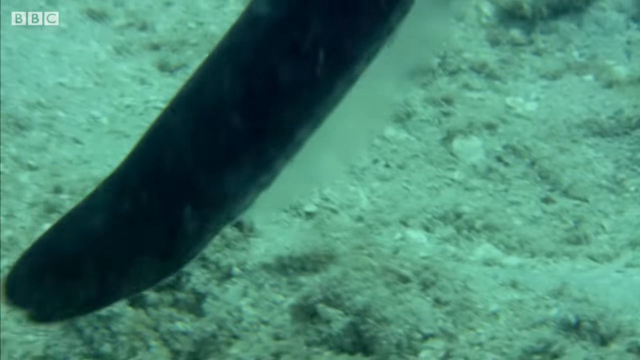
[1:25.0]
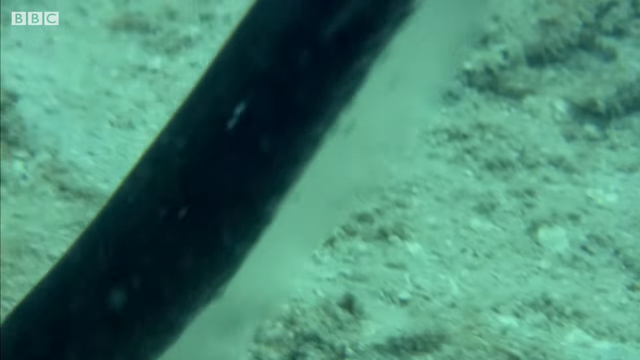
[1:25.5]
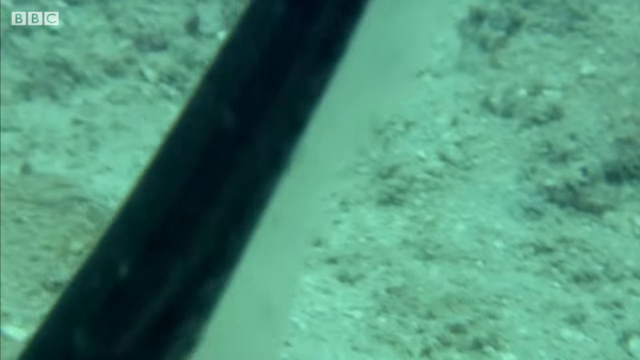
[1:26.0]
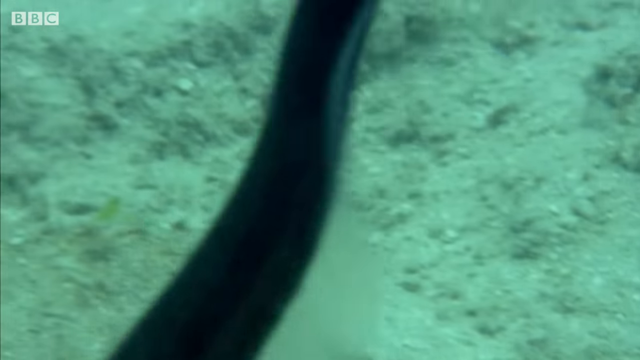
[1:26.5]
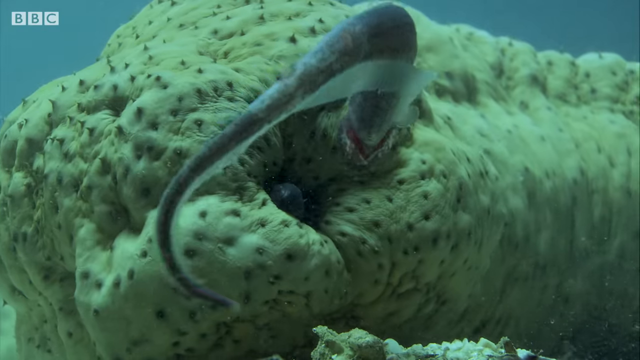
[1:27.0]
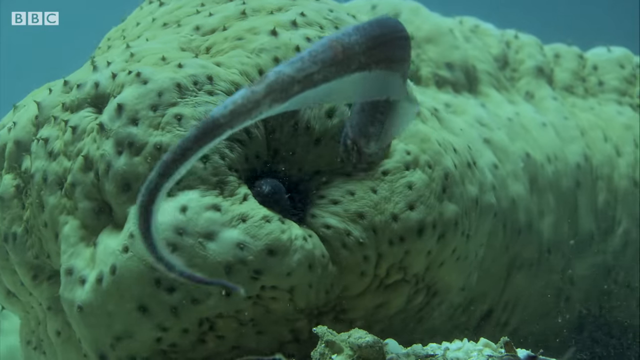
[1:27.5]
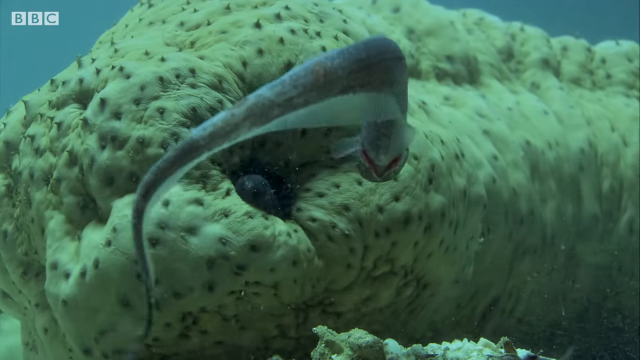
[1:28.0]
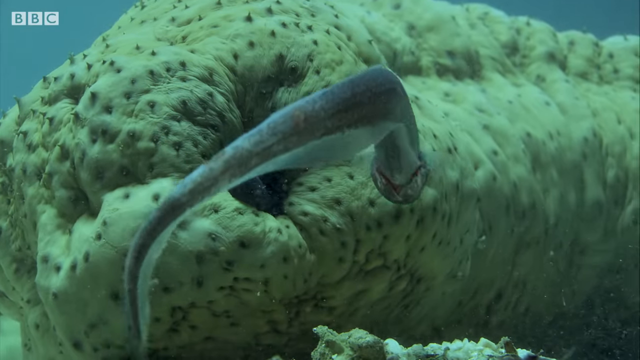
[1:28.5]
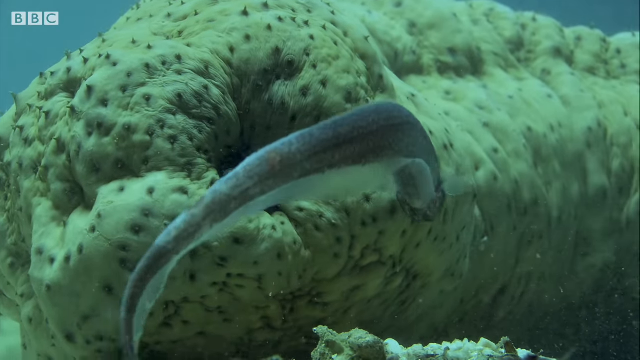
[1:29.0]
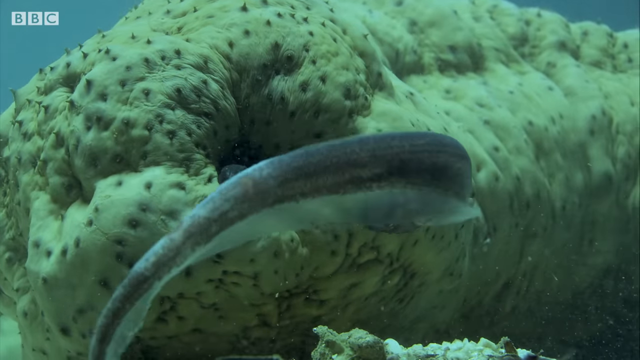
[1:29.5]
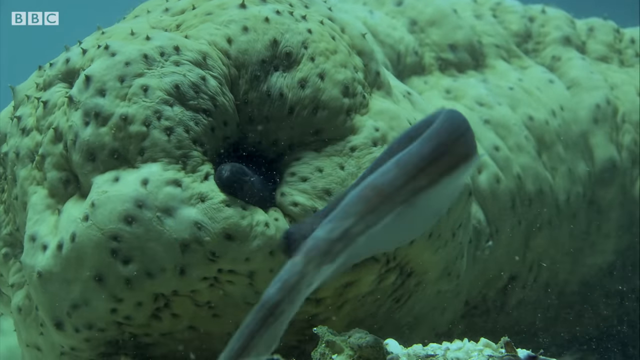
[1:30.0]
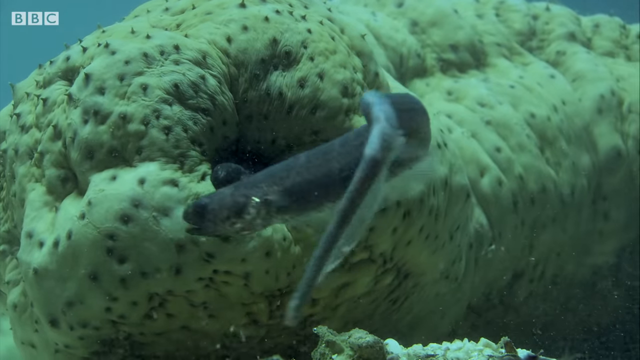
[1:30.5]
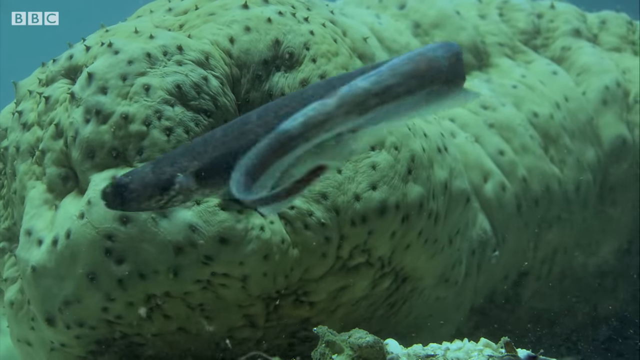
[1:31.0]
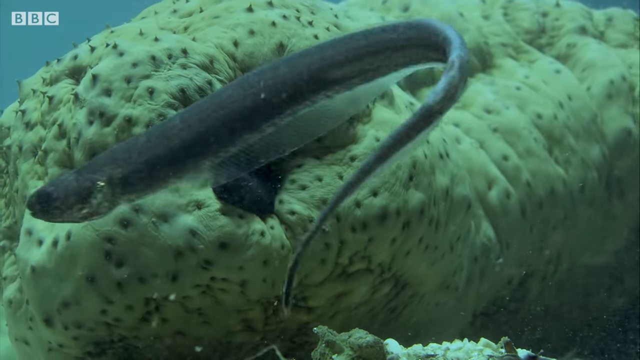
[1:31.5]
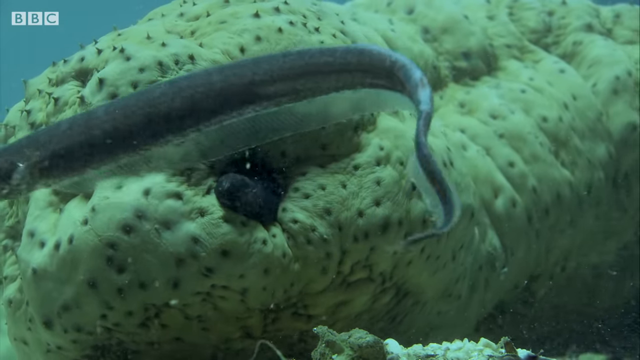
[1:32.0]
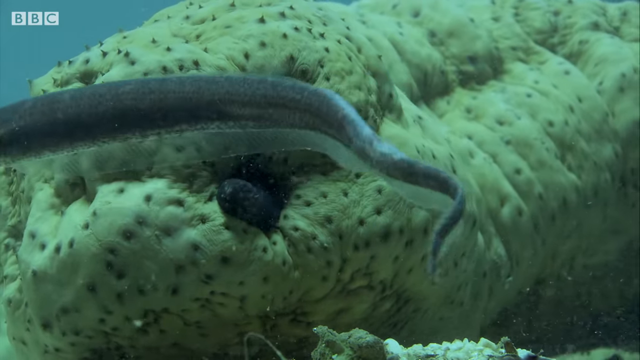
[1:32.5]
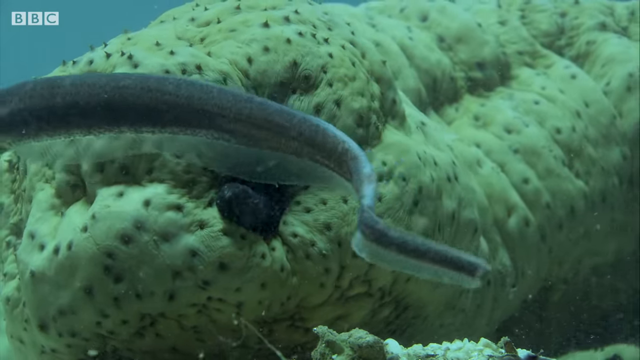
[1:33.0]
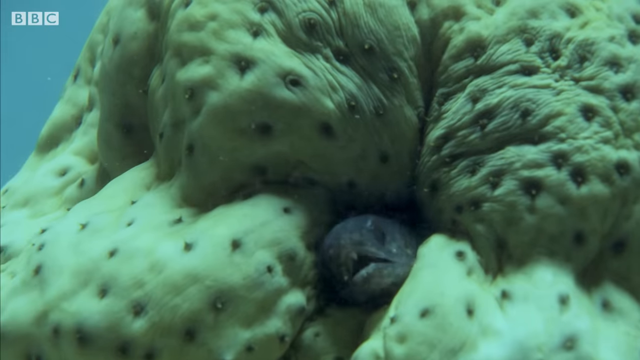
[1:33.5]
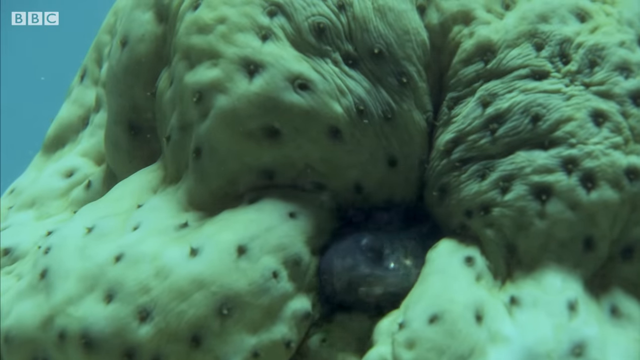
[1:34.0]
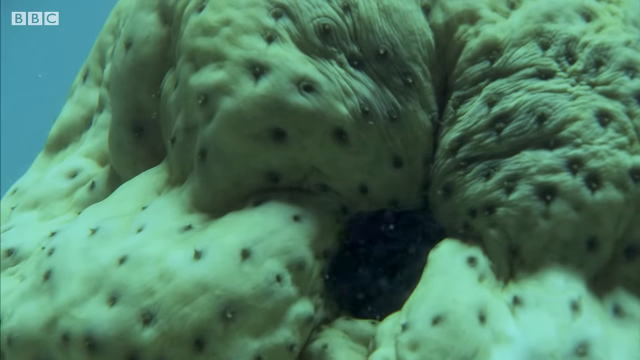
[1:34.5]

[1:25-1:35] The eel is still staying near the creature, swimming around it. What looks like a mouth keeps opening and somewhat closing, and the eel swims around it but does not go back inside. Suddenly the video cuts to a shot of the eel inside the hole, its head looking out, its mouth opening and closing repeatedly. There is no other sea life in the picture, just the eel and the creature, in the same setting of sandy bottom and murky-looking water. The eel keeps lingering near the creature.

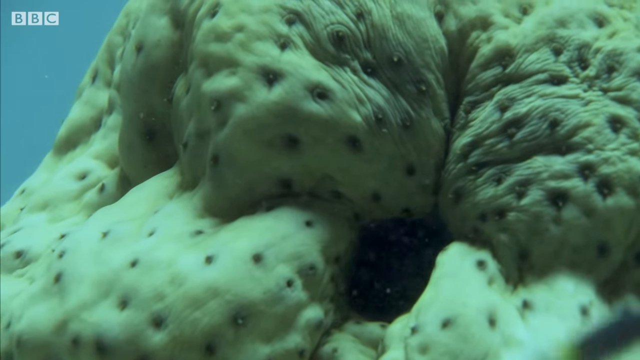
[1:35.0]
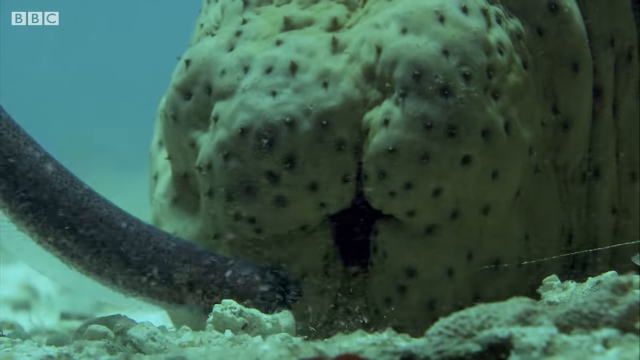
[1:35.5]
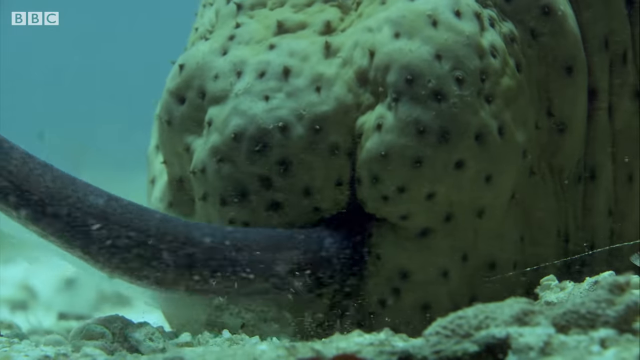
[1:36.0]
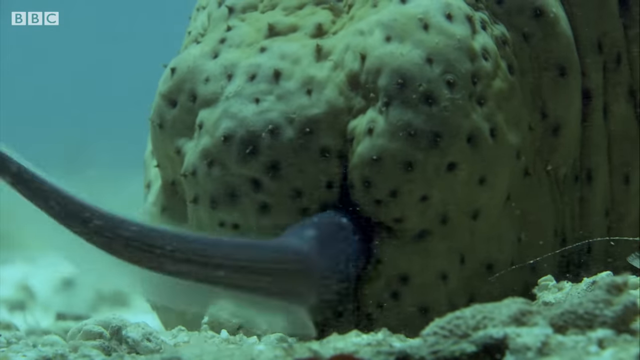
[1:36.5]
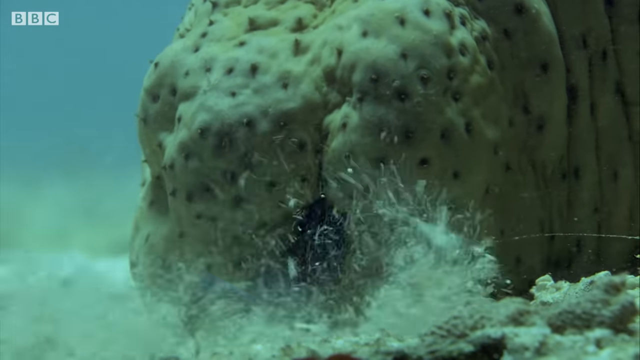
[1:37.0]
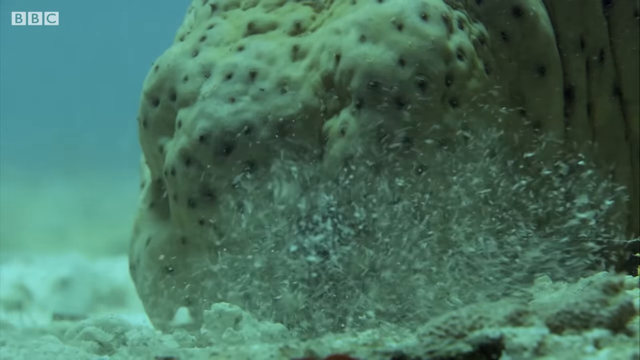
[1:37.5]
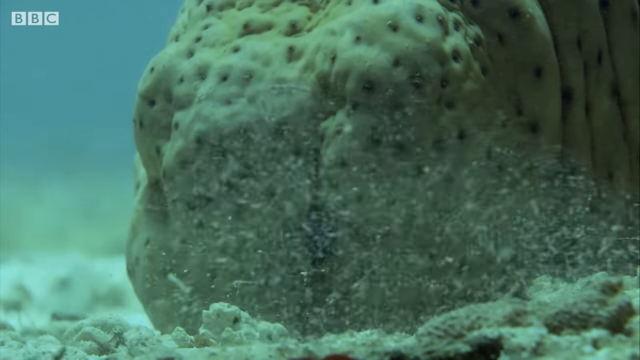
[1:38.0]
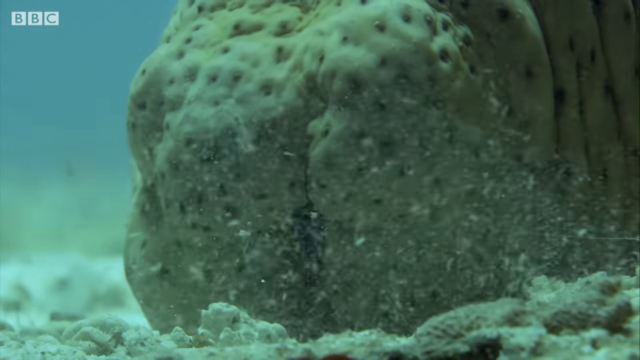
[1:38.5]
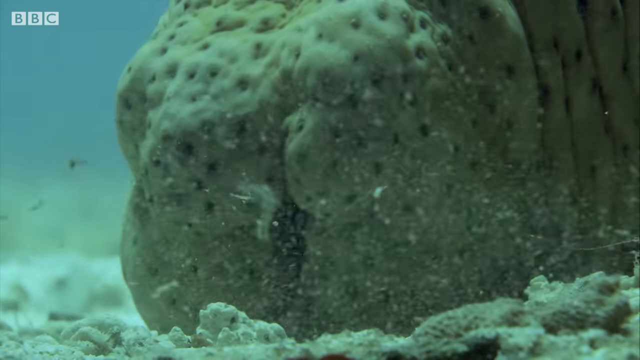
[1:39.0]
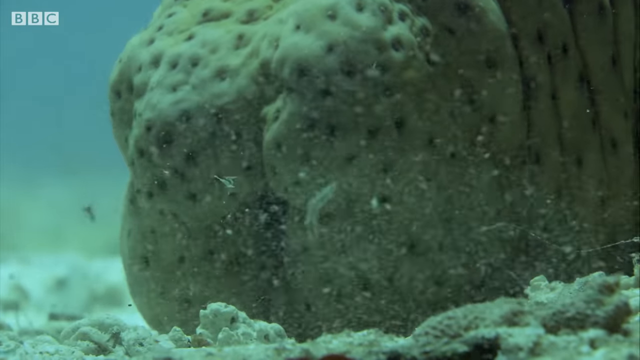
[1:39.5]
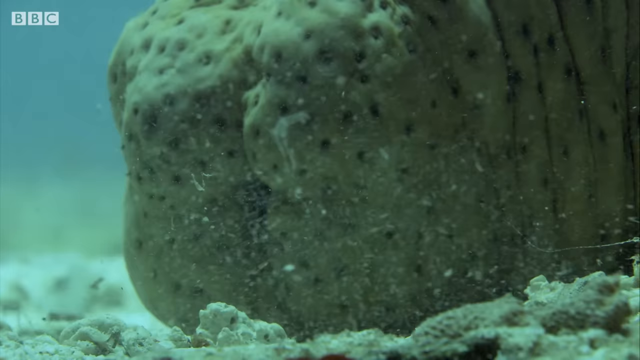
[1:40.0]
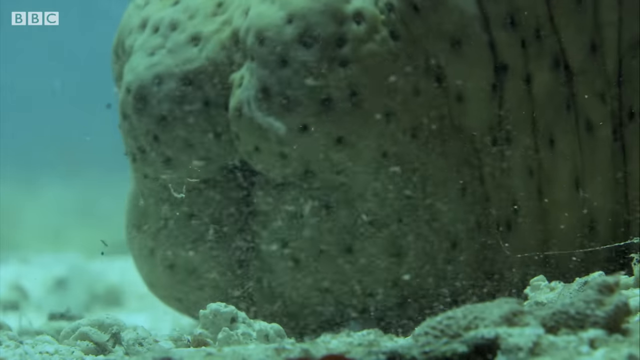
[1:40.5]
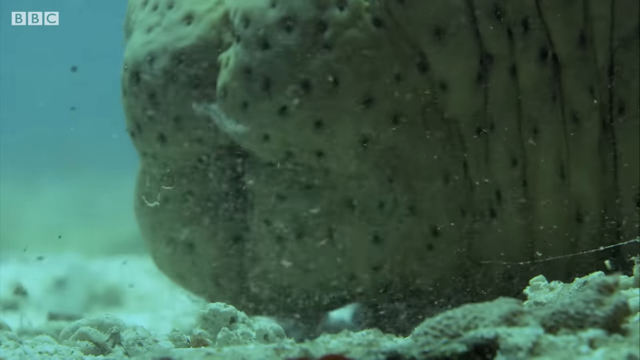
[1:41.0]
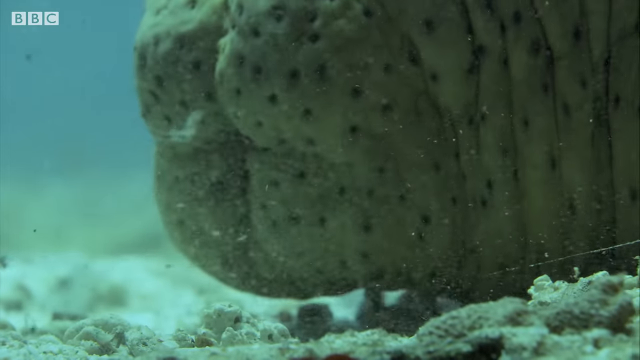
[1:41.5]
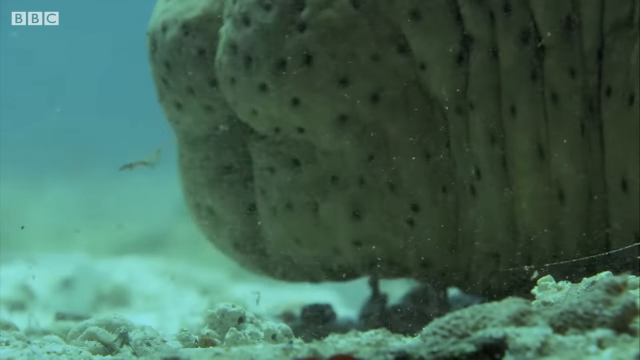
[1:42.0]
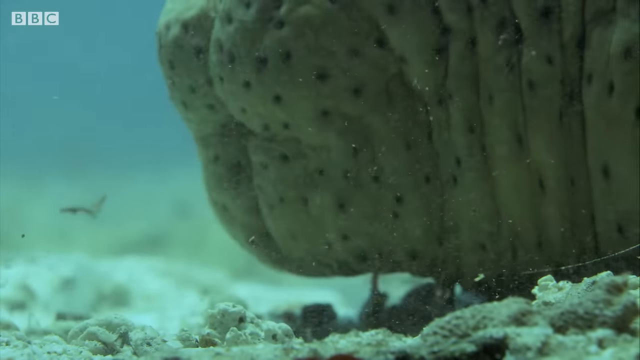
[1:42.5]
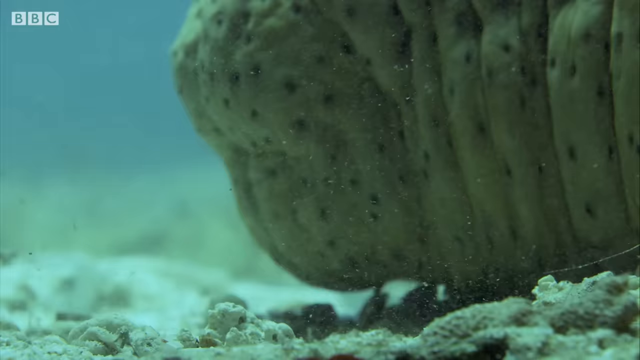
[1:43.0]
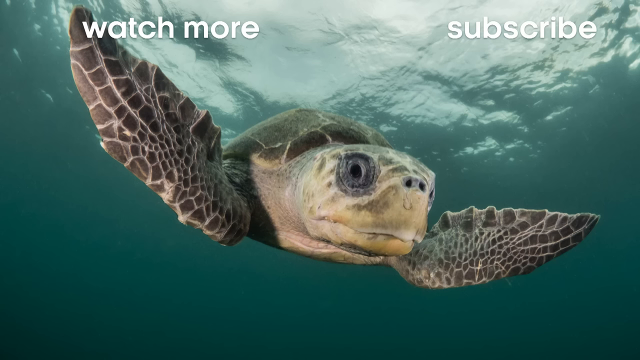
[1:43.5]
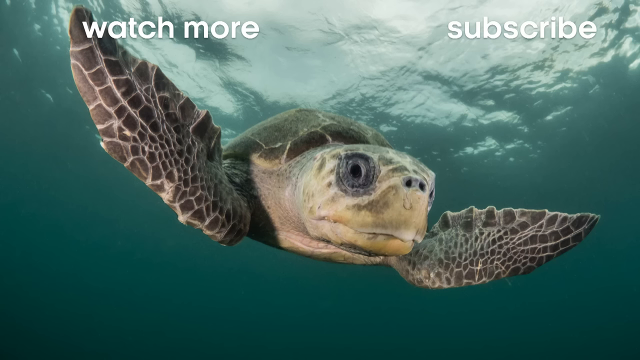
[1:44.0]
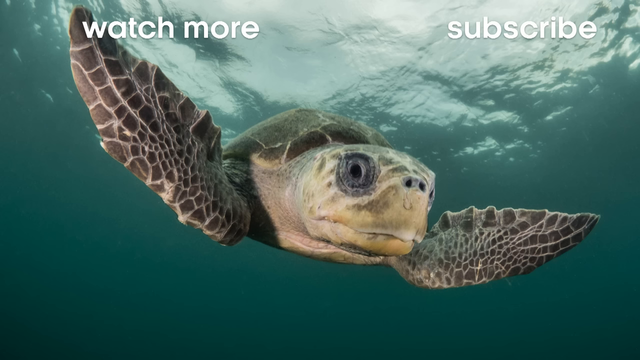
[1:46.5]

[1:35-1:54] A very quick shot shows the eel going inside the organism. It appears to happen very rapidly, stirring up the sand and debris at the bottom of the water. It almost looks as though the organism sucks the eel up like a piece of spaghetti.